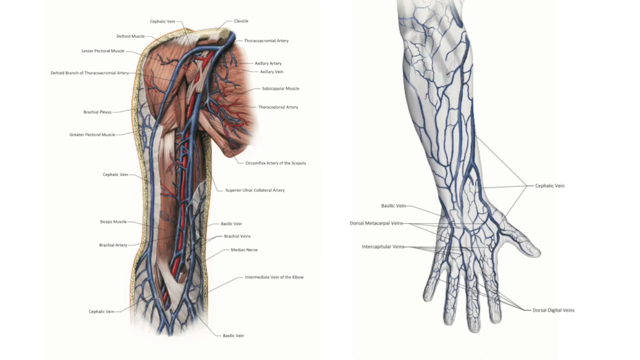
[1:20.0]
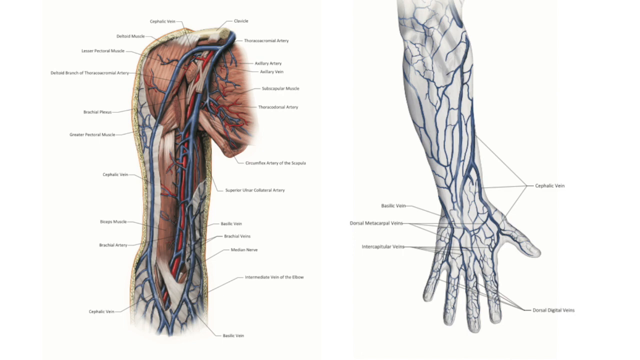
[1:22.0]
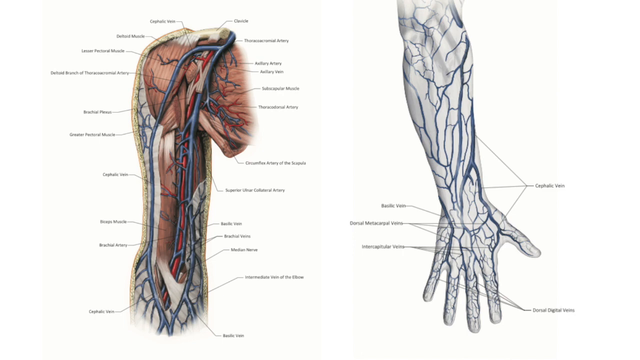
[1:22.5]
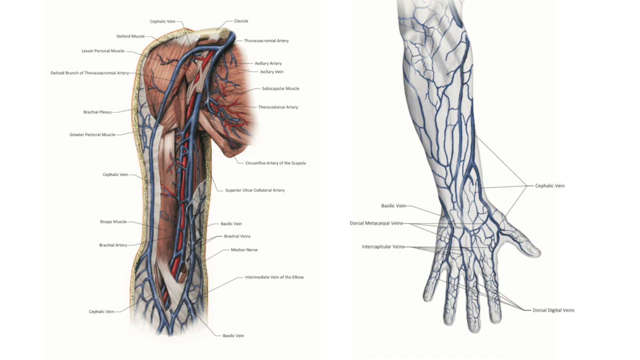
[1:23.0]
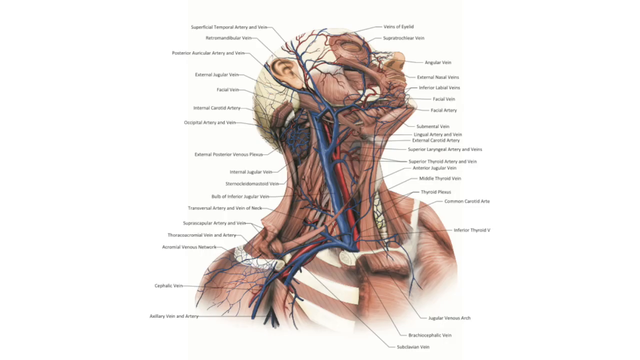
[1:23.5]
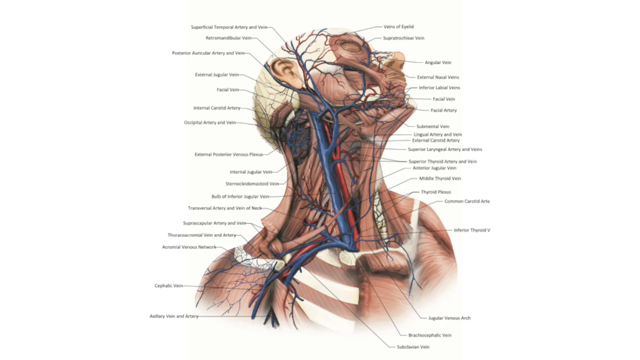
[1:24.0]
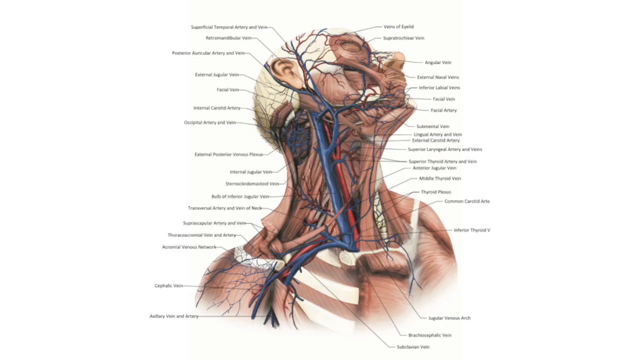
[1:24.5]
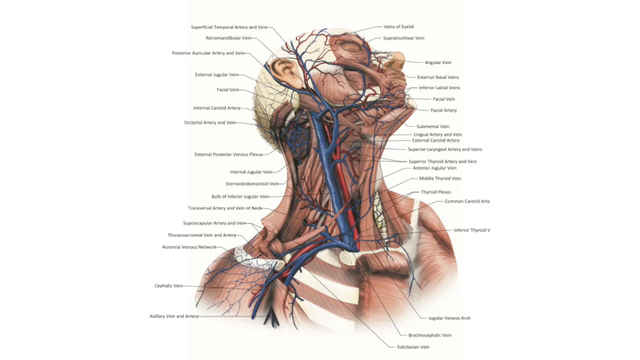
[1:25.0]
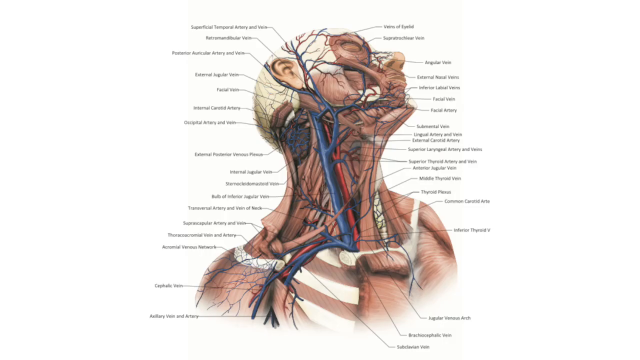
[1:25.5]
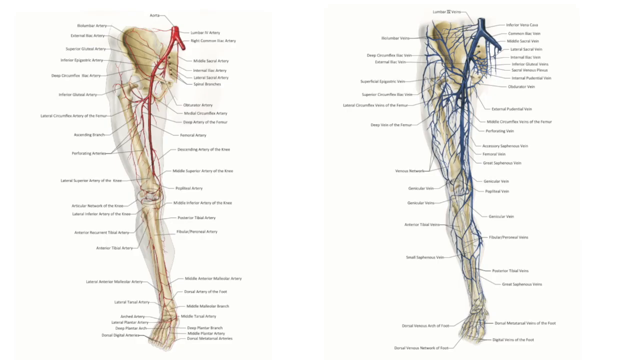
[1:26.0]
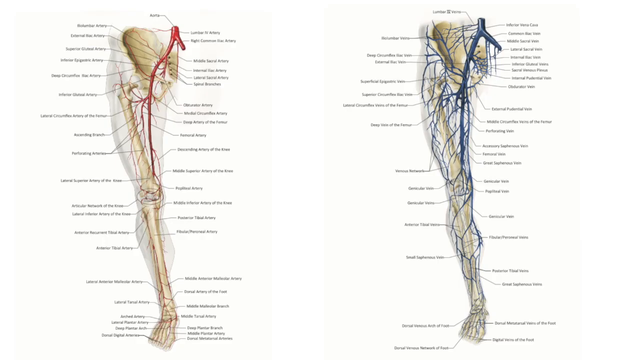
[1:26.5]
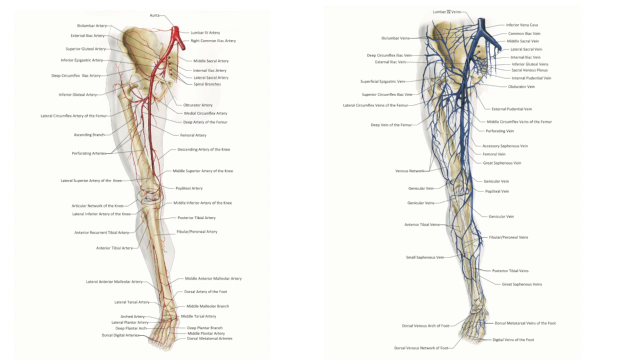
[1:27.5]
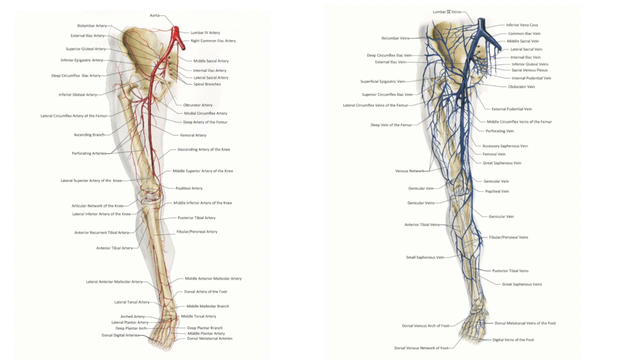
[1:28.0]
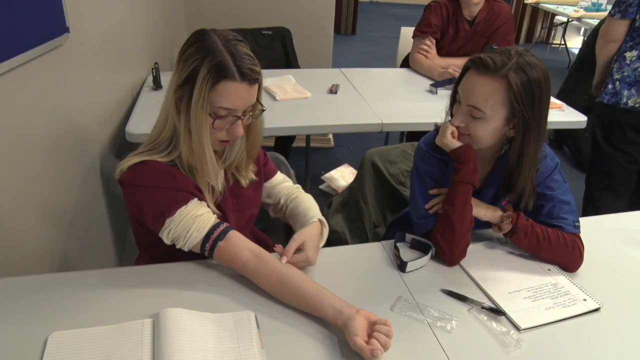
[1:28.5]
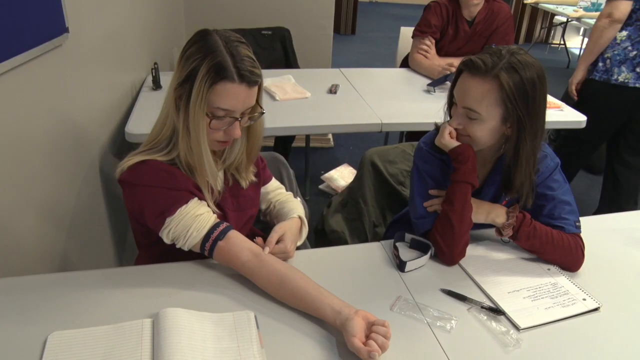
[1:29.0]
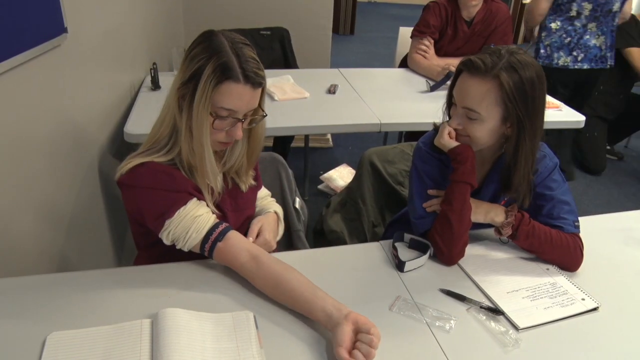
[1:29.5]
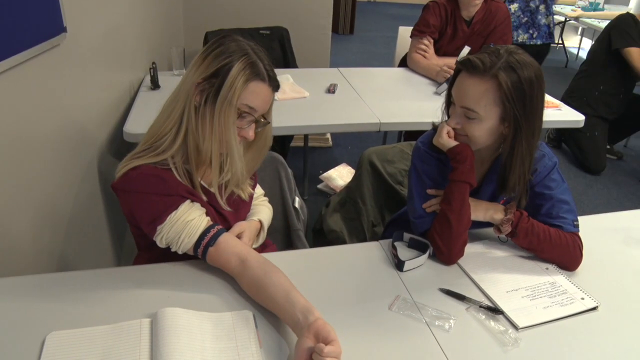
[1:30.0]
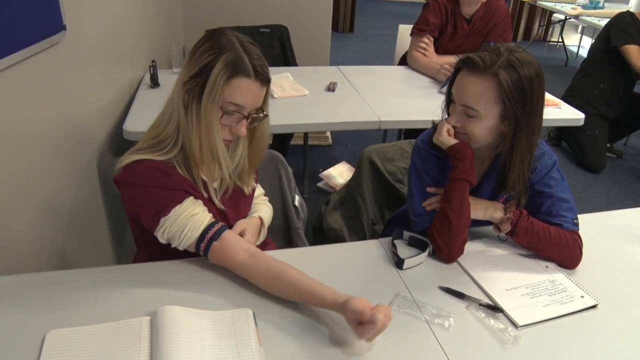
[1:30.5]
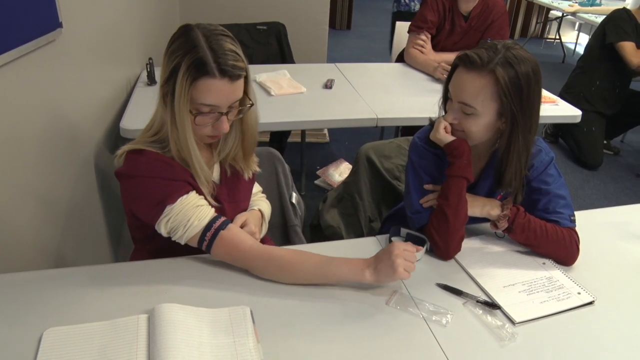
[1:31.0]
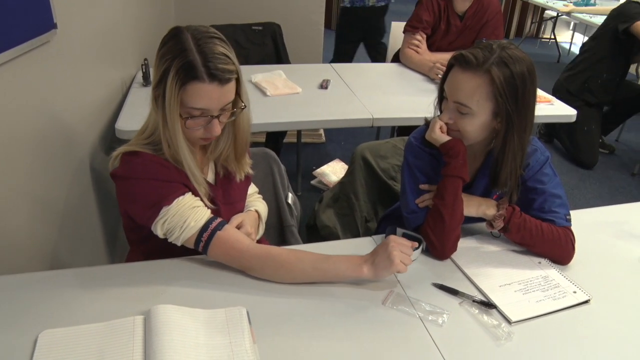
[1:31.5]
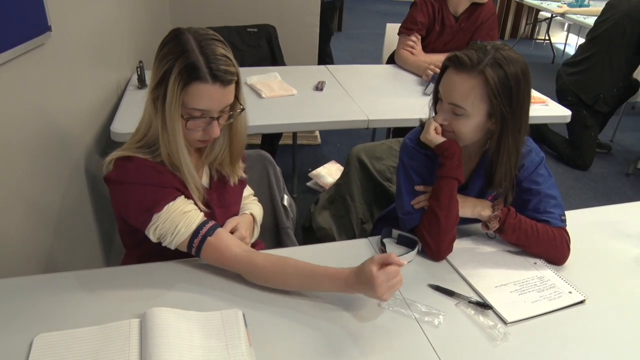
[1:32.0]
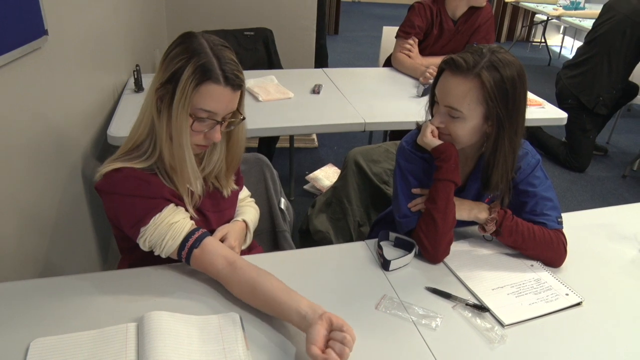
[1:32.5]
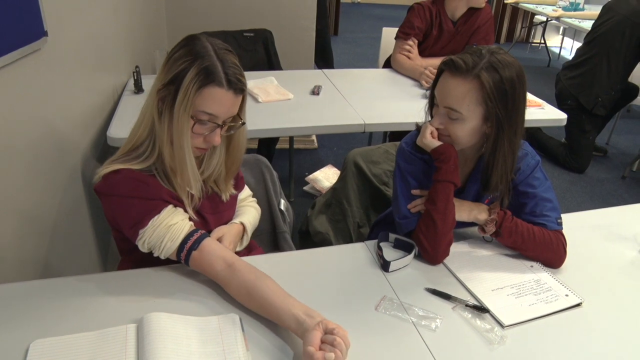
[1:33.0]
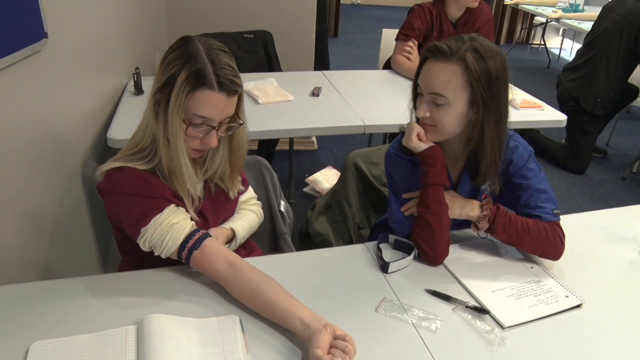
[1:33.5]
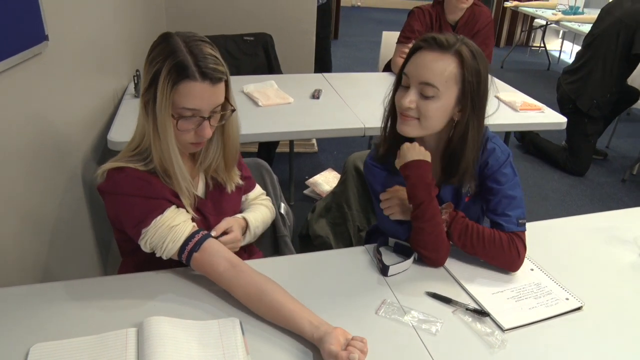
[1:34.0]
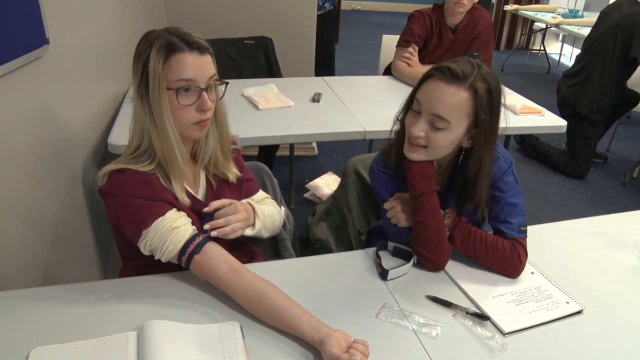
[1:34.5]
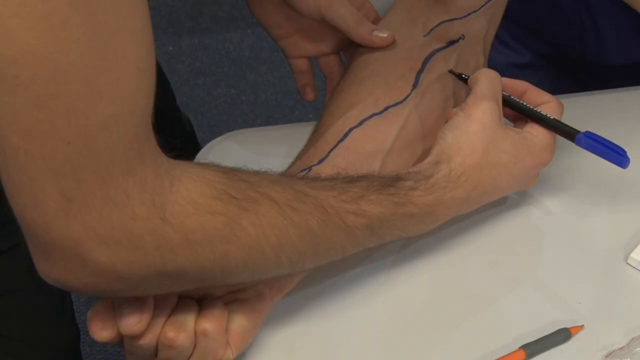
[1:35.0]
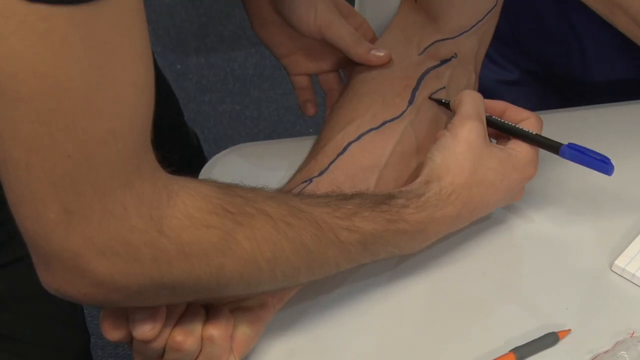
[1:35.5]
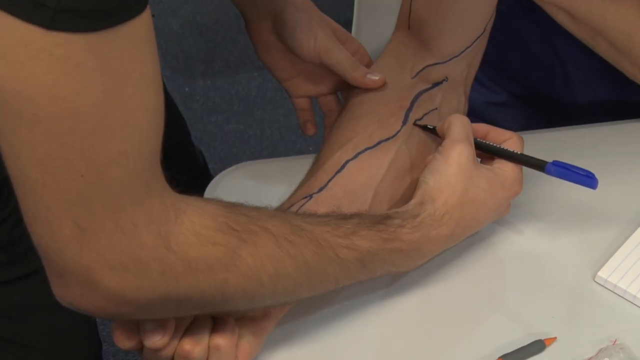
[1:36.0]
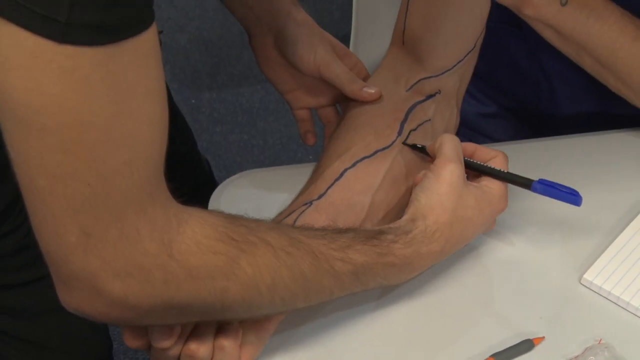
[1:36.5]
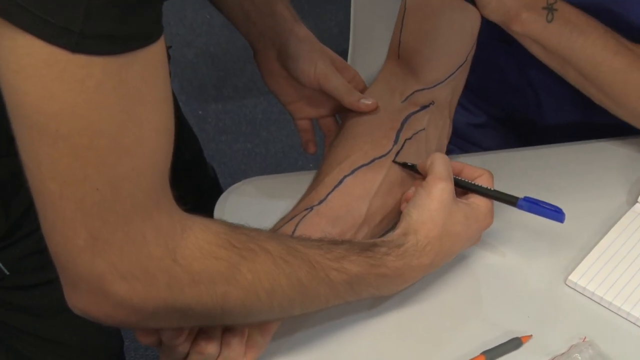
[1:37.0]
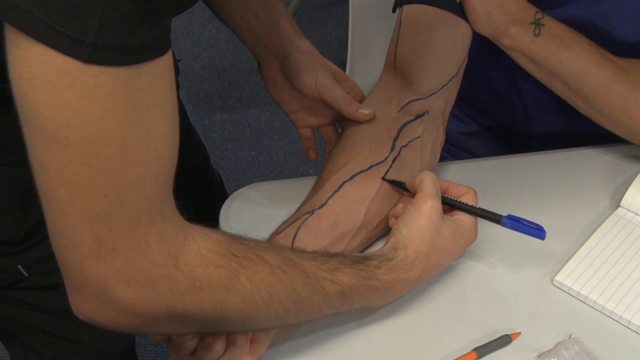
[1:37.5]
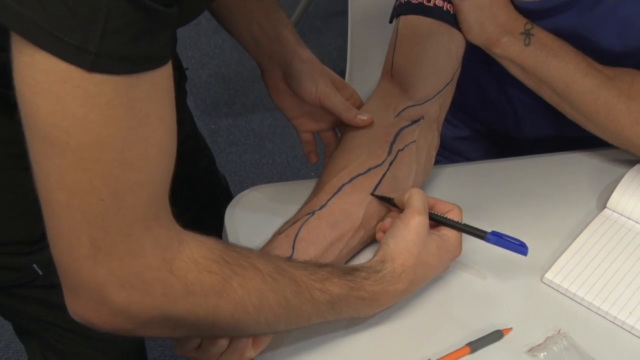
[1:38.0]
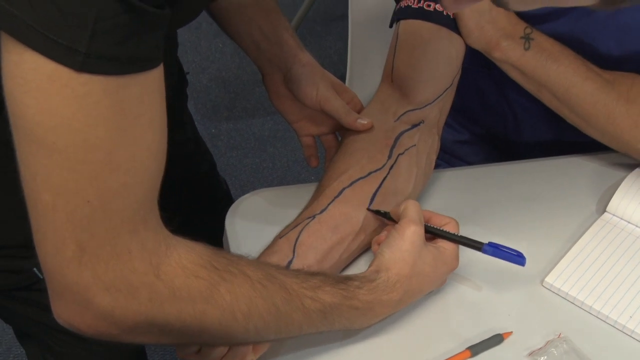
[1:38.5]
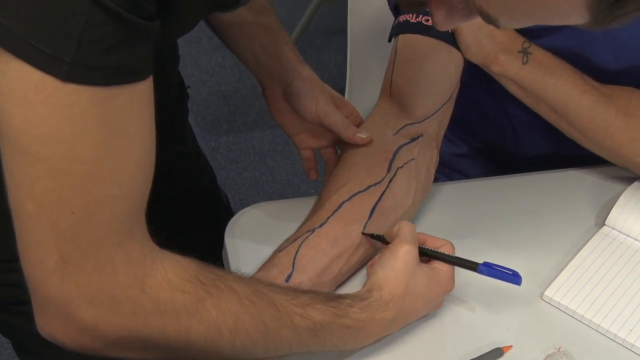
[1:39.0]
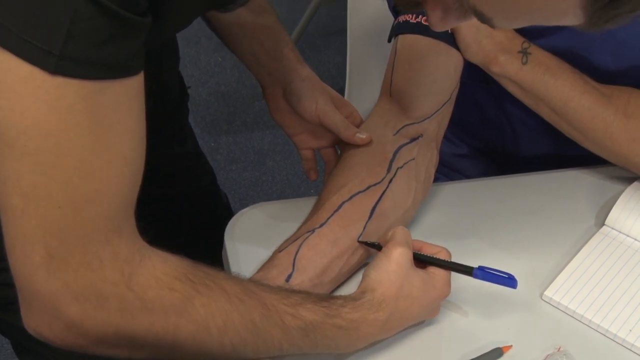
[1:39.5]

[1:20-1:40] A diagram shows, on the left, what looks like a close-up of a person's shoulder and bicep area with all of the muscles and veins visible and little labels next to everything, and on the right a close-up of what looks to be a person's forearm and hand, the arm mostly white with blue veins running through it and labels pointing to the different veins. Next is a diagram of the head, shoulders and top of the chest showing the muscles in a light brown color with blue and red veins; the person in the diagram seems to be leaning their head over, stretching the neck, and many labels mark the different blood vessels and muscles. Then comes a diagram of what looks like two legs: on the left, a leg showing the bone with red blood vessels running through it, and on the right the same leg with the bone but with blue veins, both with many labels for the different parts. The scene changes to what looks like a classroom where two female students sit at a desk. One has her arm laid out on the table with the forearm facing up, her other hand sort of touching her inner elbow, and she rolls the arm over so the forearm faces down toward the table. She appears to have a few bands tied around her bicep to constrict the circulation. The other student watches, resting her chin on her hand. The first student rolls her arm back so the forearm faces up, and the other leans in a little closer. The student with her forearm out then looks up as if looking to the instructor for instruction and sort of raises her eyebrows. In a close-up, a person has their arm laid out on a table as if getting a shot while someone draws over their veins with a blue marker.